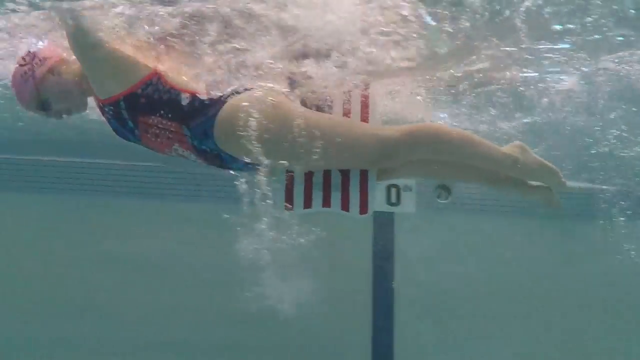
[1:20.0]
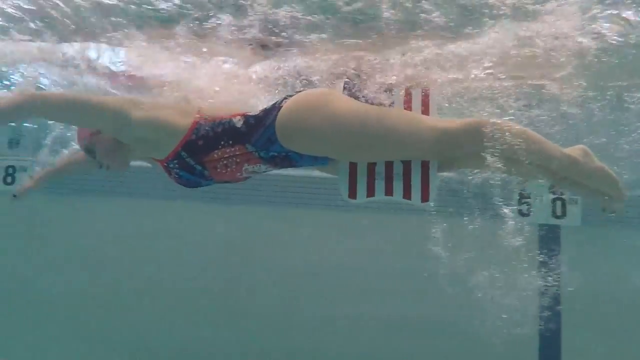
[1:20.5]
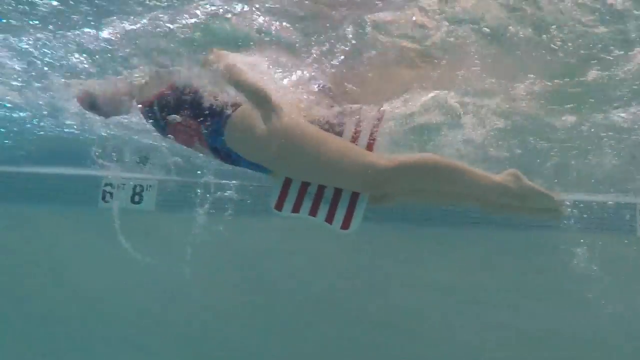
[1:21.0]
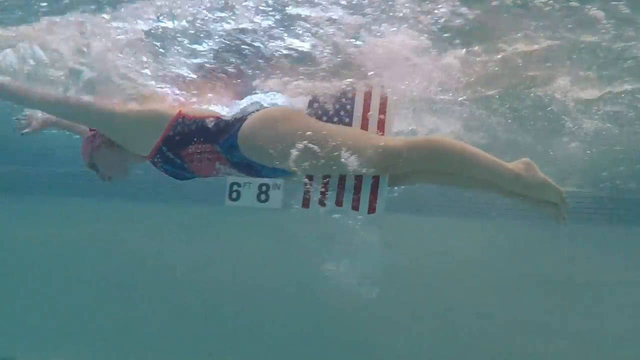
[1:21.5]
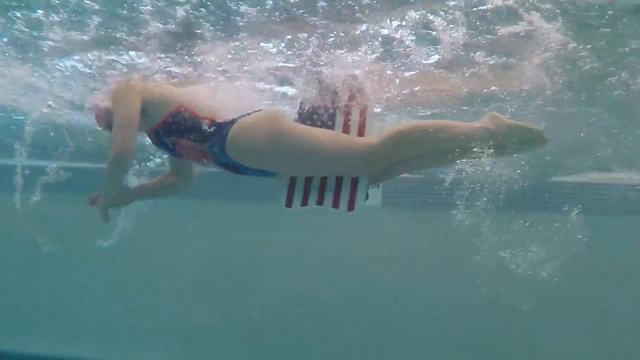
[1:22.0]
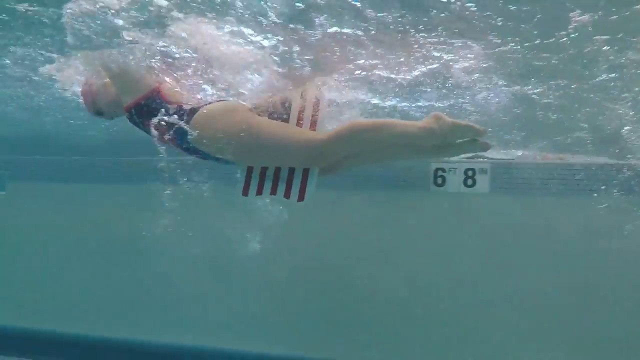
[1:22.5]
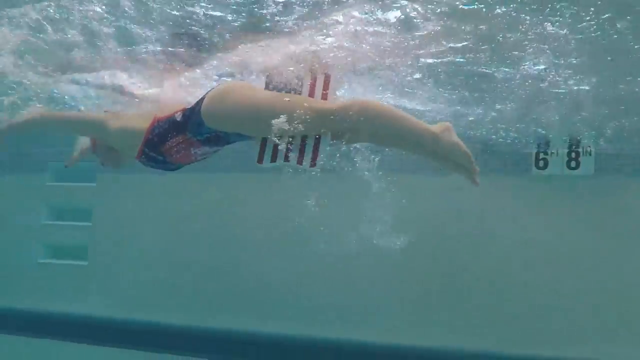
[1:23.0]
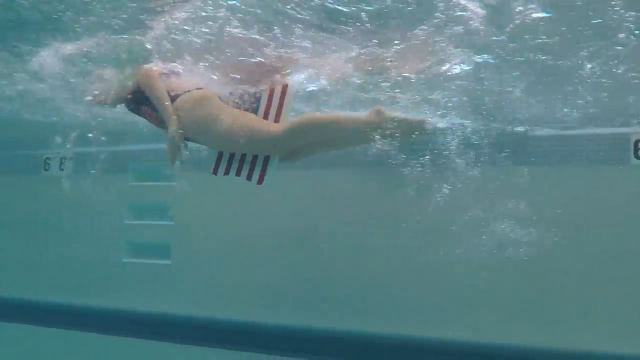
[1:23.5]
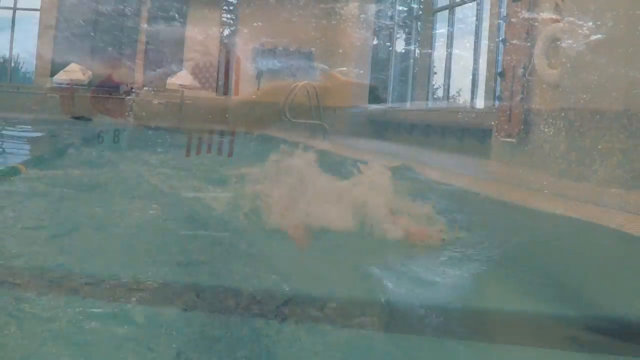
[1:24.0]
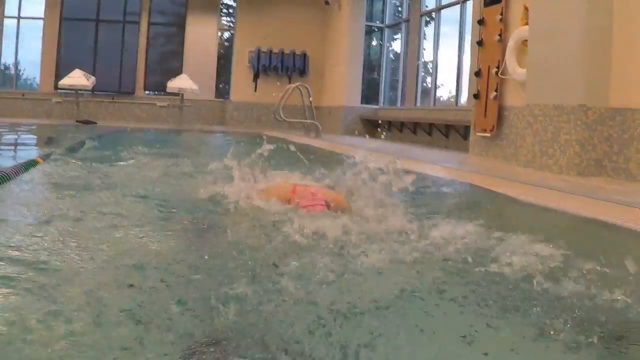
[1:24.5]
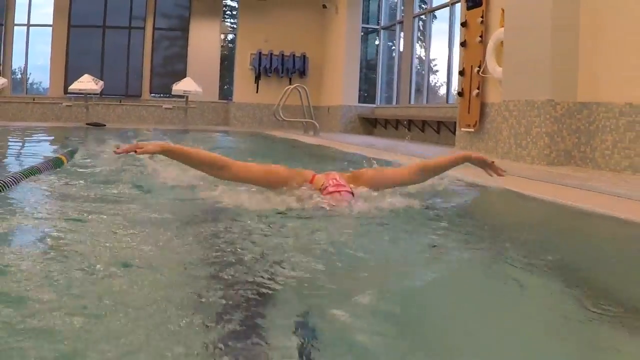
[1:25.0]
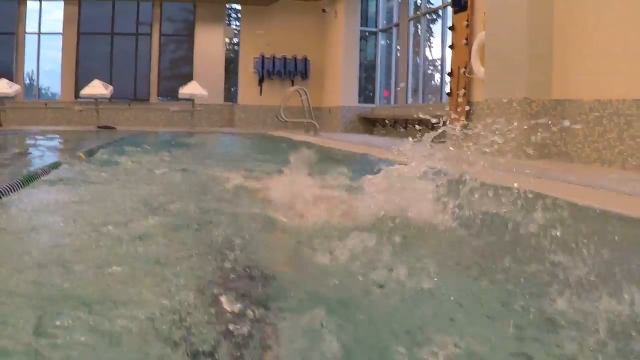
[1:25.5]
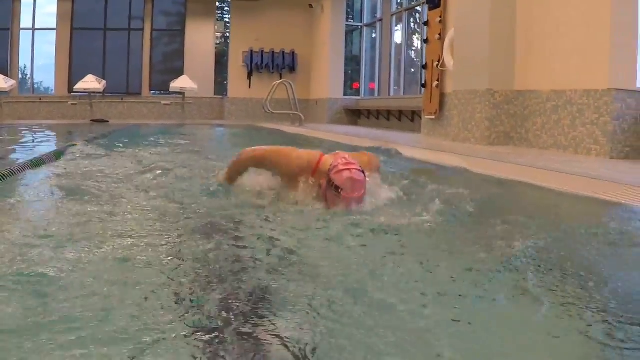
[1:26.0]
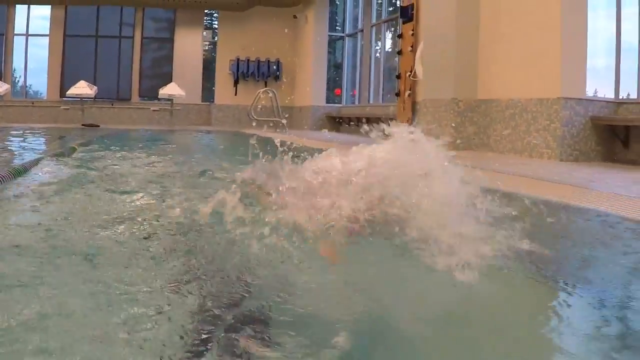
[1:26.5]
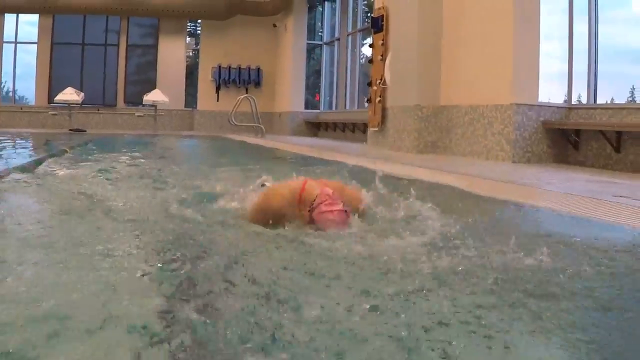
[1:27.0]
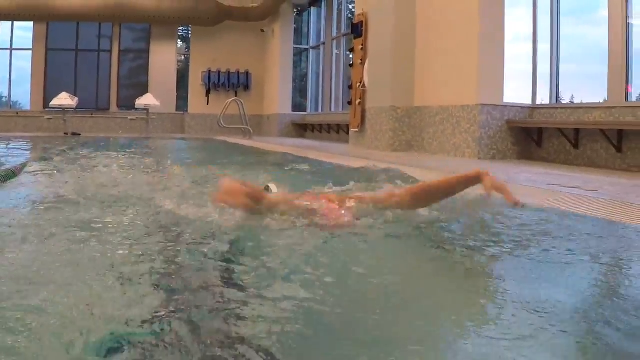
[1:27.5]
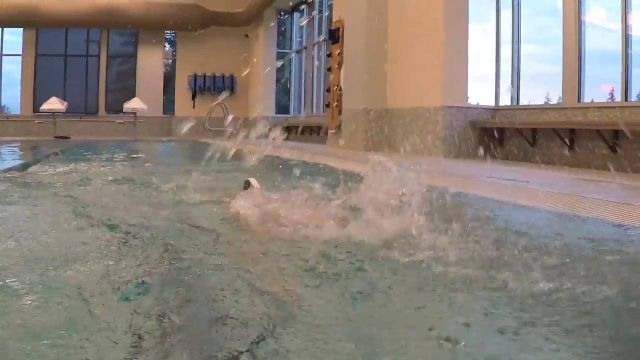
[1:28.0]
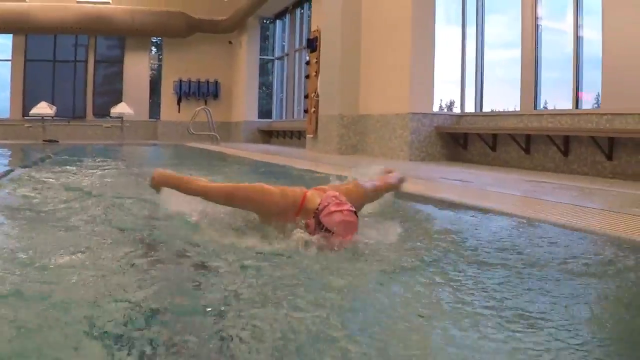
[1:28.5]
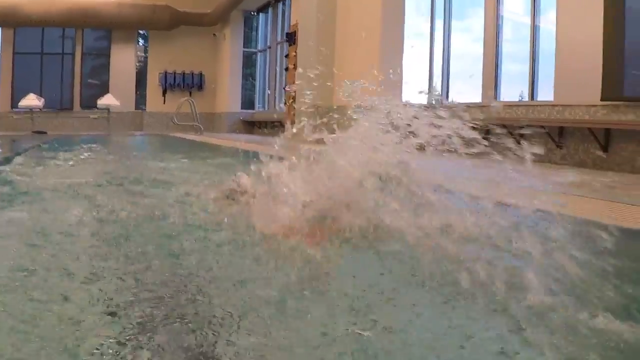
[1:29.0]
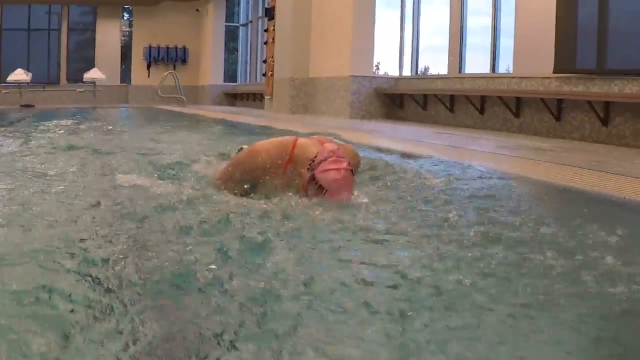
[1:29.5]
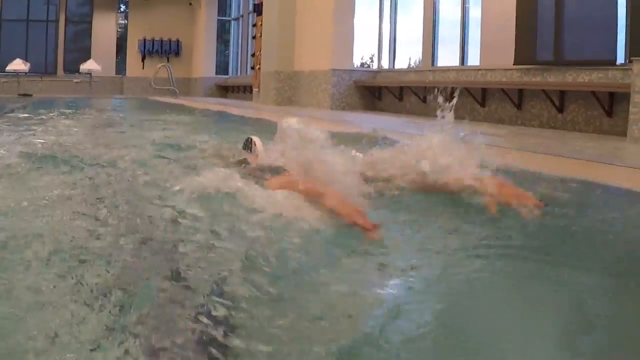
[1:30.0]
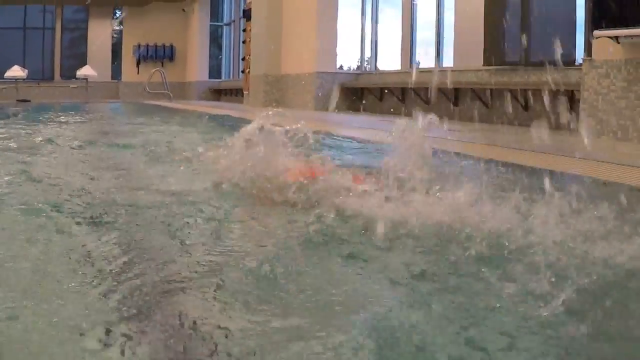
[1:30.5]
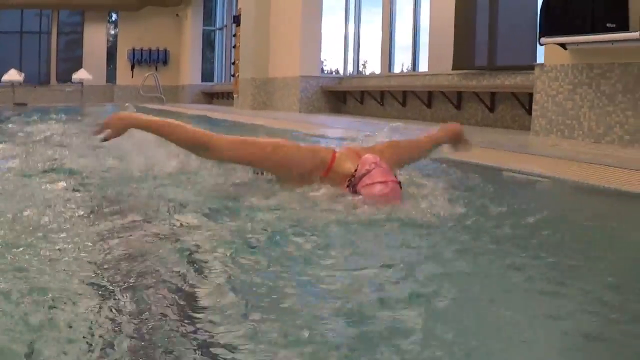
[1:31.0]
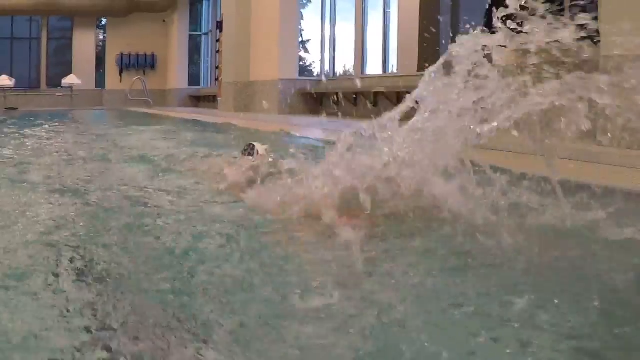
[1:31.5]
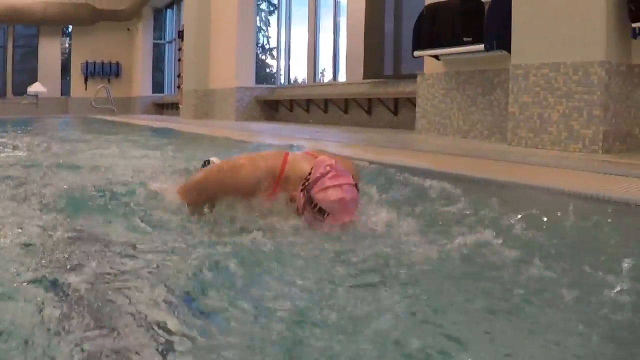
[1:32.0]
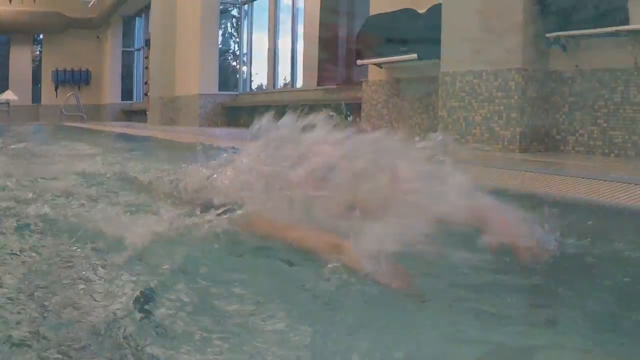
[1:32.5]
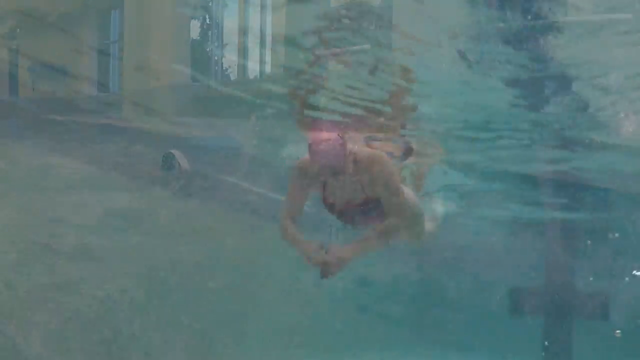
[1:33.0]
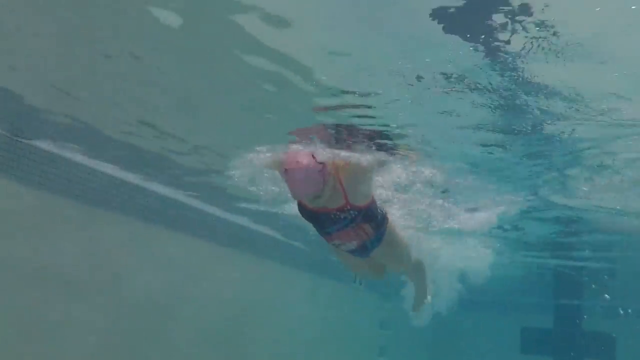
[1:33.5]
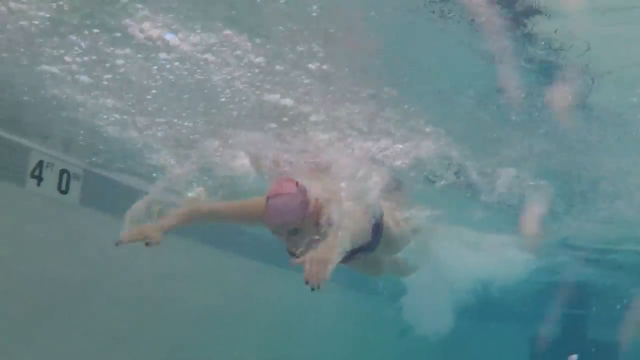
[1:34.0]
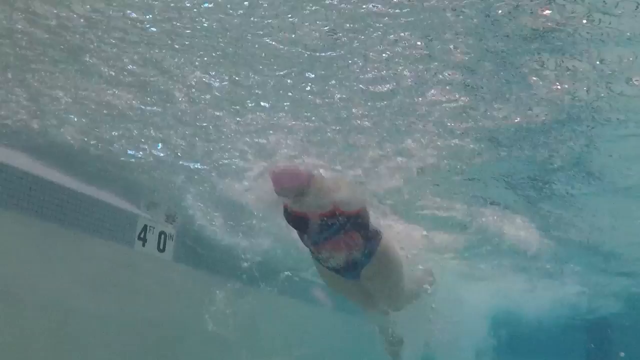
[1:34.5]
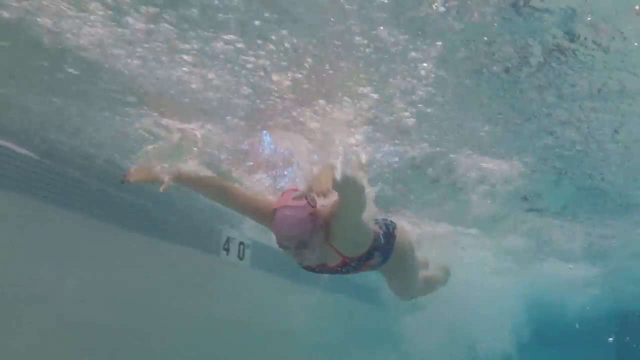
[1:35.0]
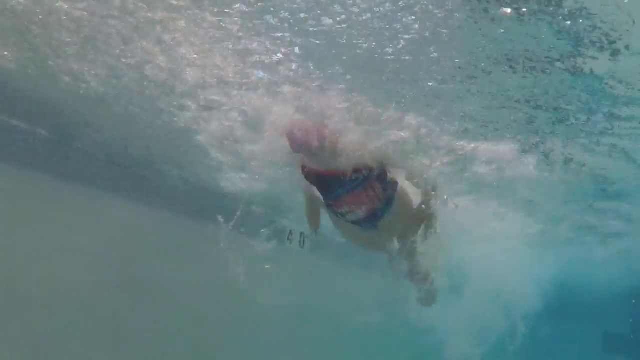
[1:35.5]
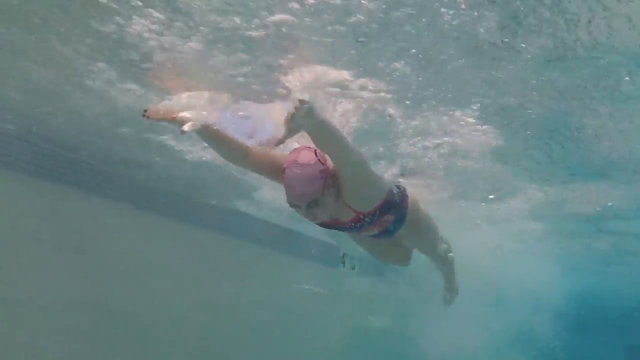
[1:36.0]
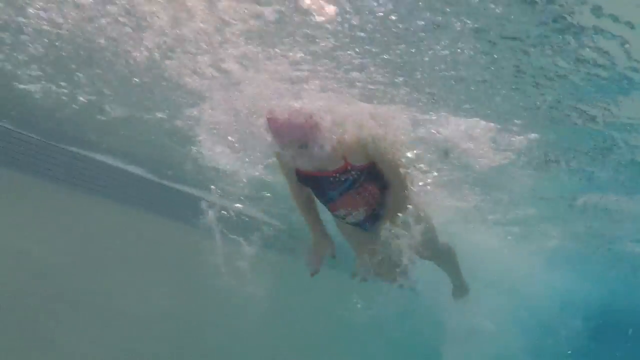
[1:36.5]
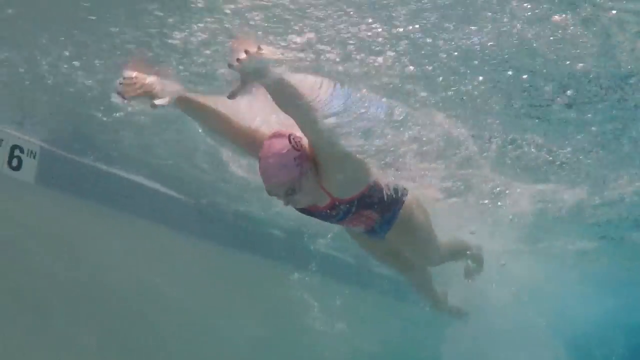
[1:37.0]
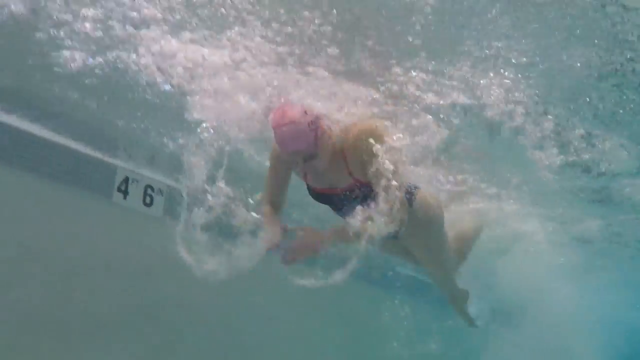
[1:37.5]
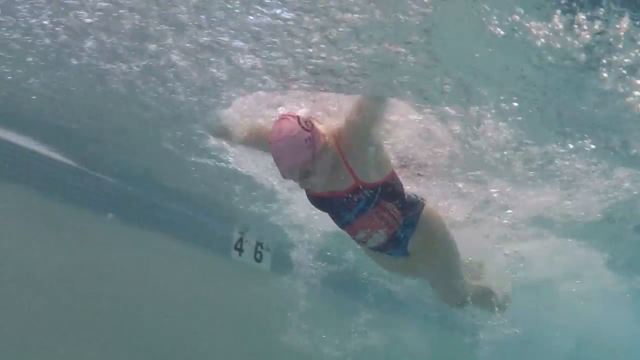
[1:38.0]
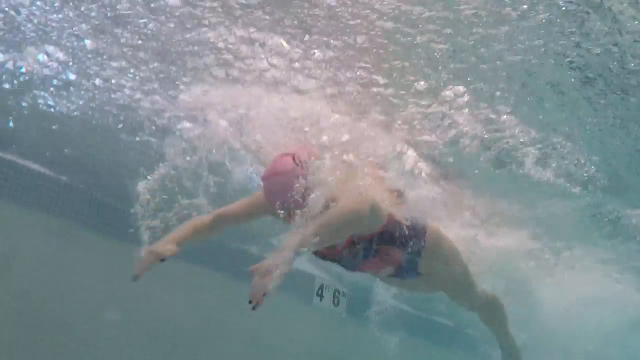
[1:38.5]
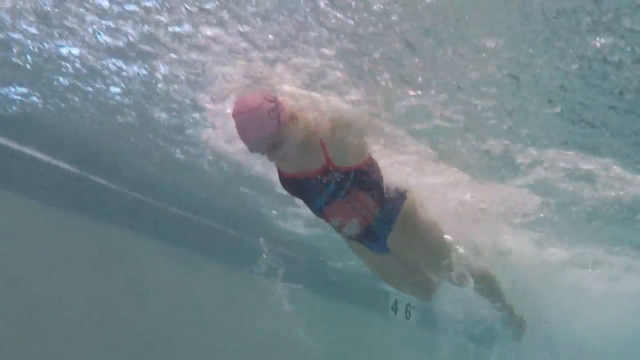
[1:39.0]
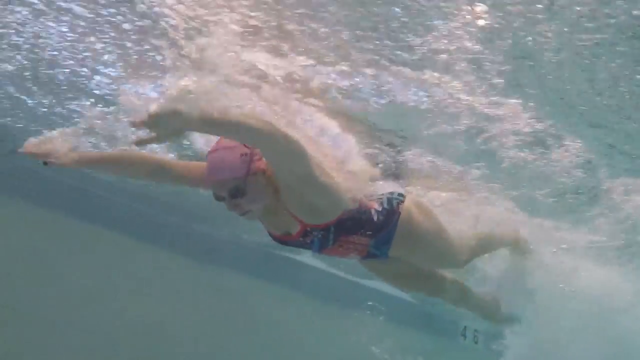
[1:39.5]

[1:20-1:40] The demonstrator shows how to use the upper body for the butterfly, with an American flag kickboard between her thighs so she is not using her legs, pulling herself through the water. Seen from the front, she has very strong shoulders, and she goes at least seven or eight strokes before taking a breath. She is still in the same pool, which is either a half Olympic or an Olympic size, apparently half Olympic. She still wears the pink cap, black goggles and blue maillot with pink trim and some designs on it. Her legs are pale white, while her face is not quite so pale.